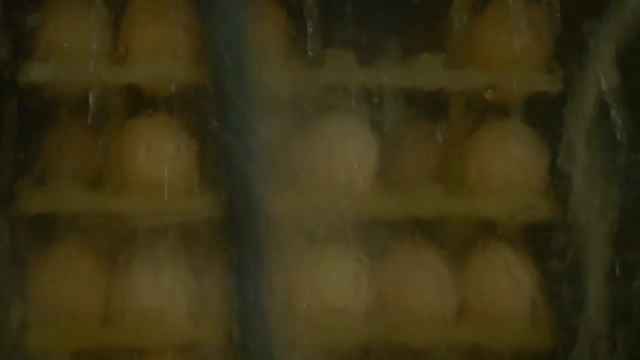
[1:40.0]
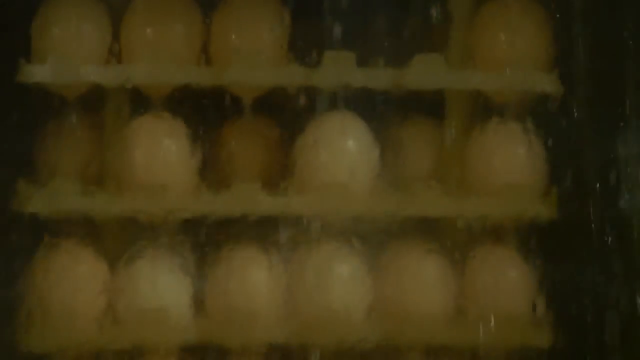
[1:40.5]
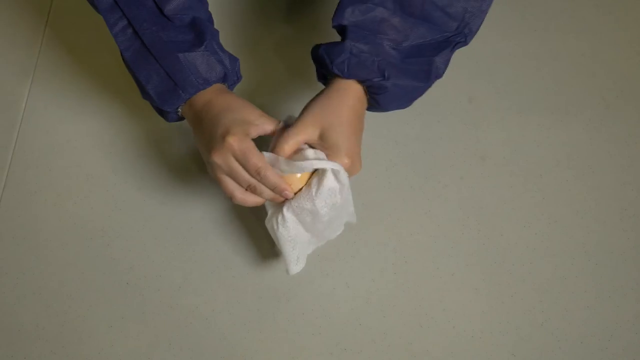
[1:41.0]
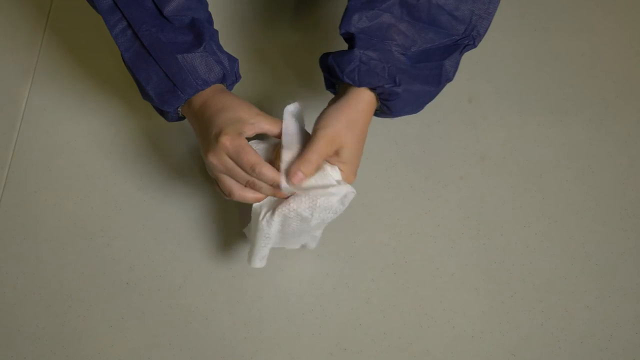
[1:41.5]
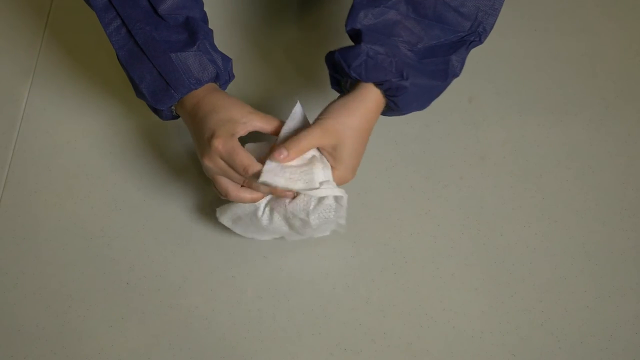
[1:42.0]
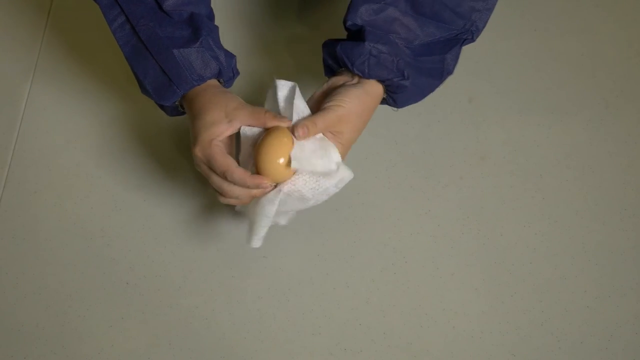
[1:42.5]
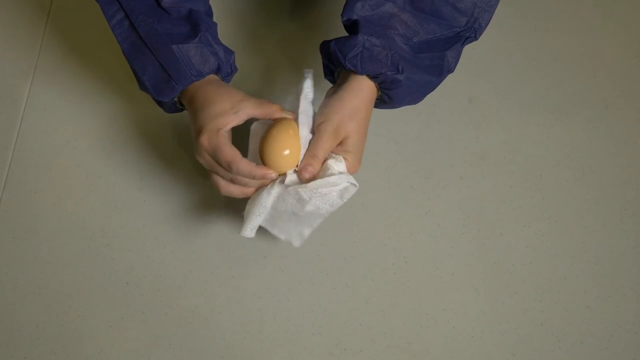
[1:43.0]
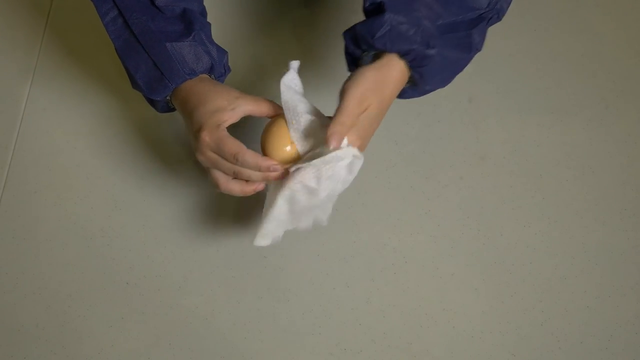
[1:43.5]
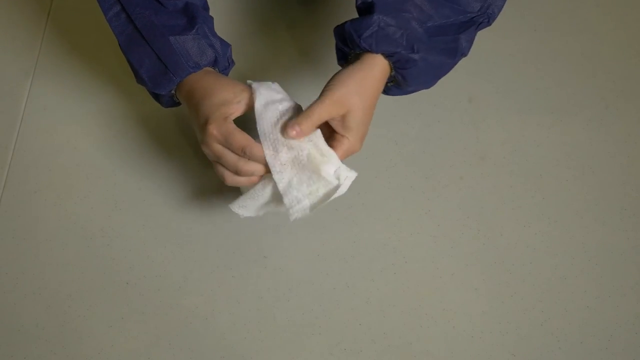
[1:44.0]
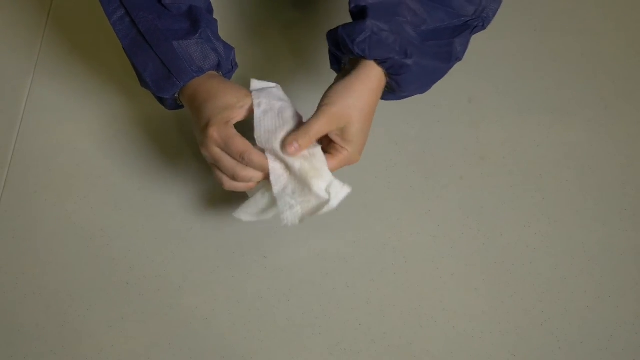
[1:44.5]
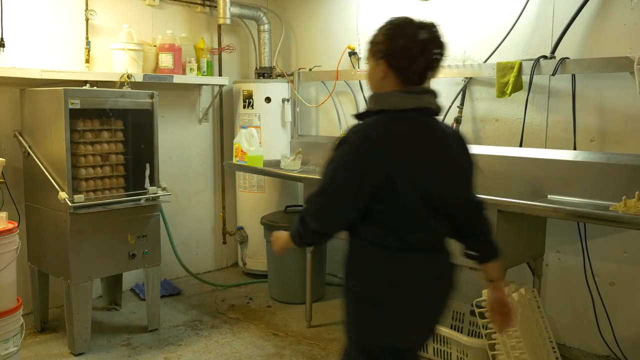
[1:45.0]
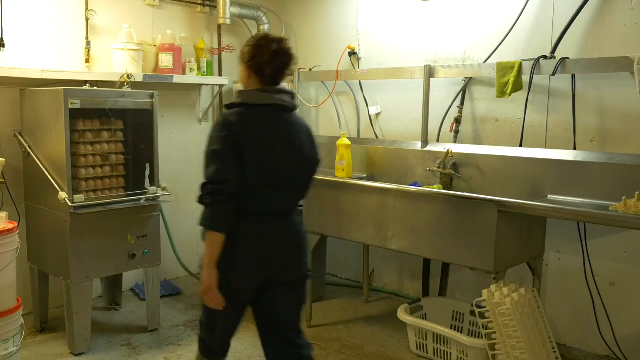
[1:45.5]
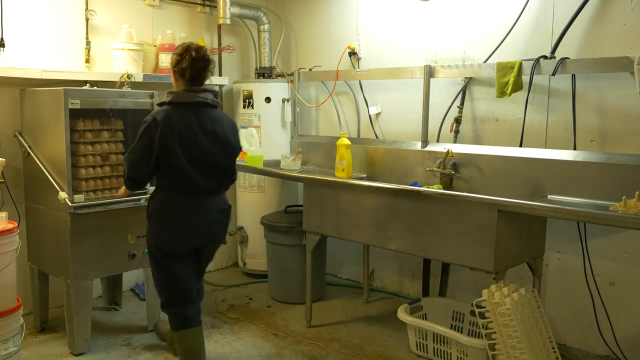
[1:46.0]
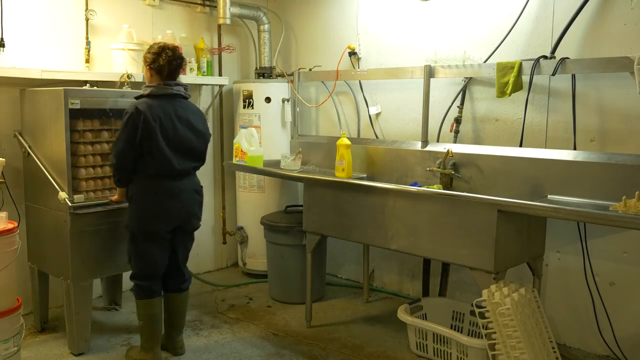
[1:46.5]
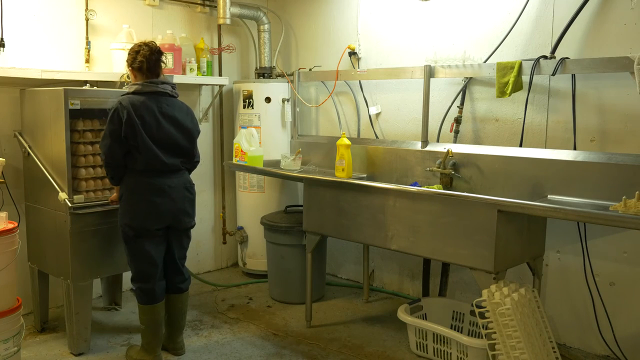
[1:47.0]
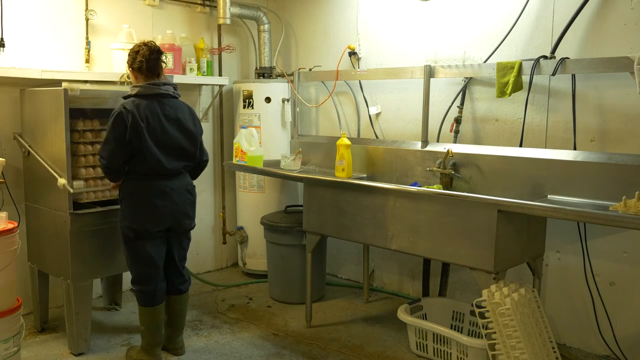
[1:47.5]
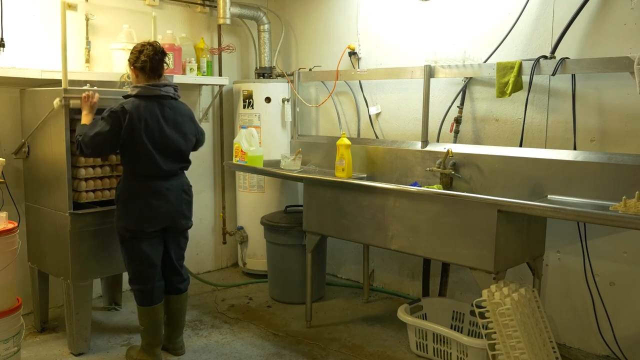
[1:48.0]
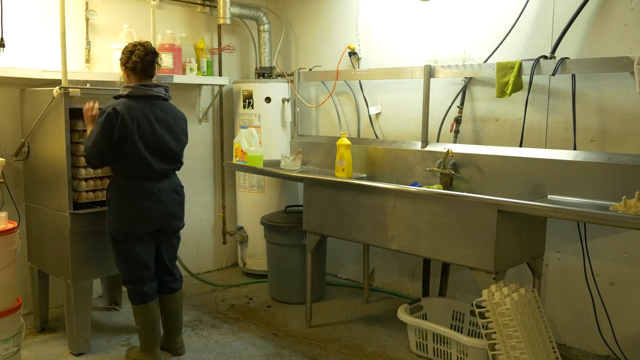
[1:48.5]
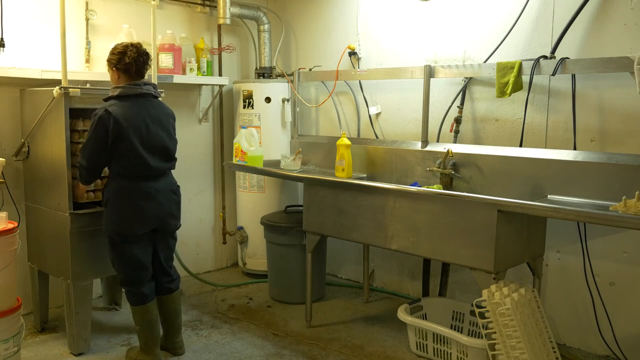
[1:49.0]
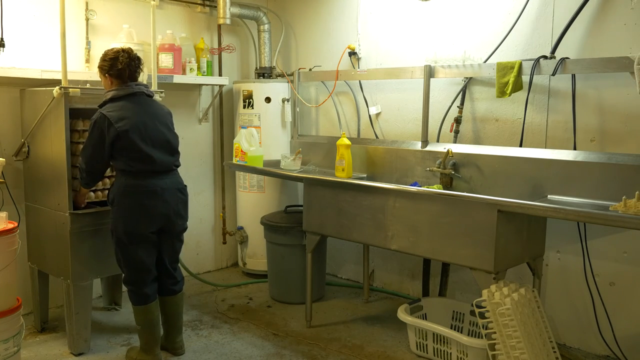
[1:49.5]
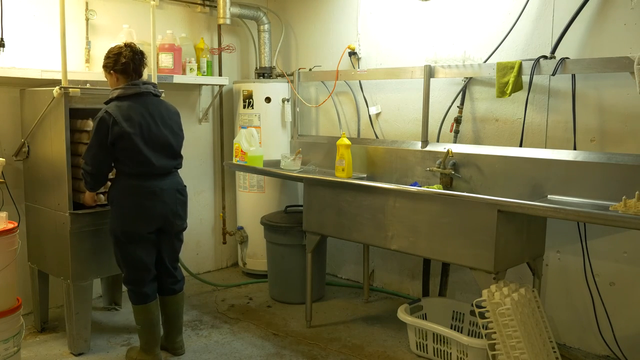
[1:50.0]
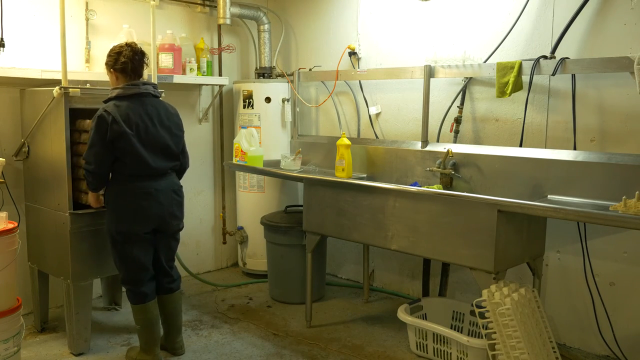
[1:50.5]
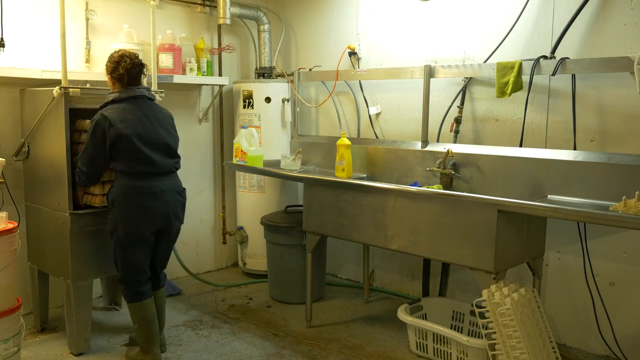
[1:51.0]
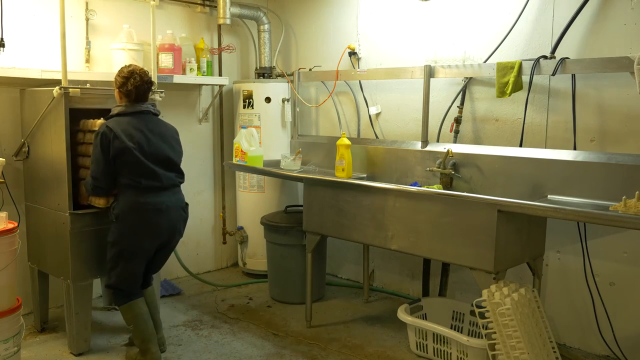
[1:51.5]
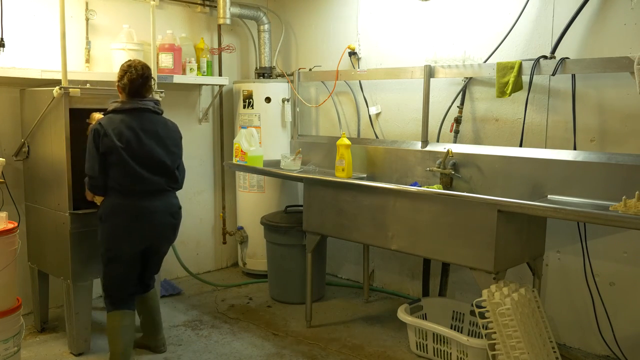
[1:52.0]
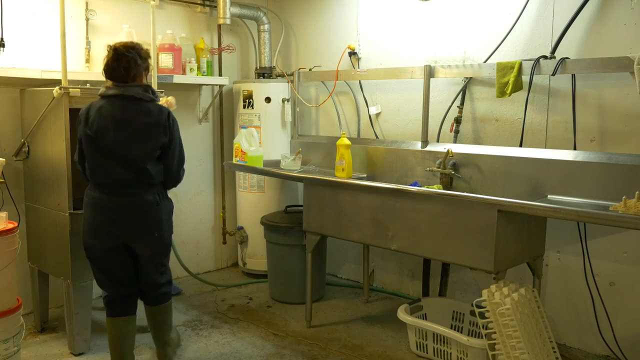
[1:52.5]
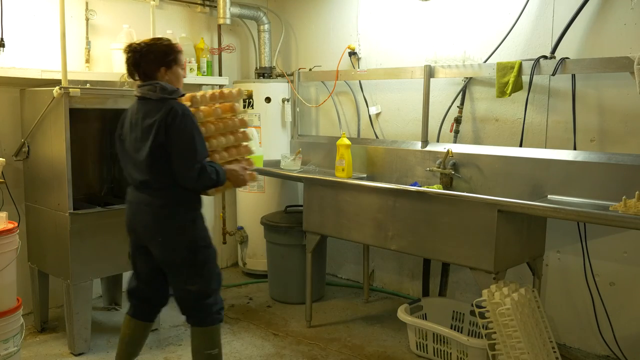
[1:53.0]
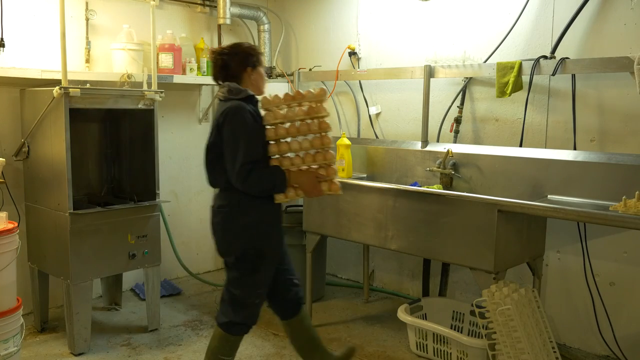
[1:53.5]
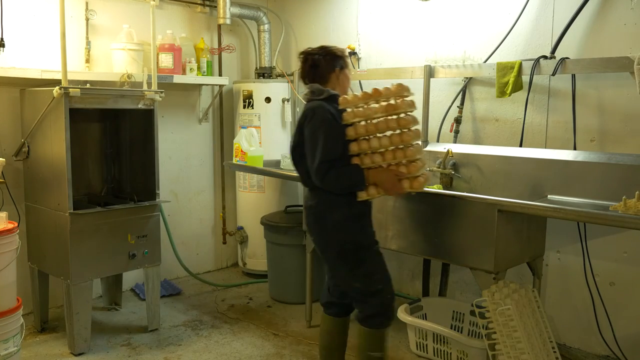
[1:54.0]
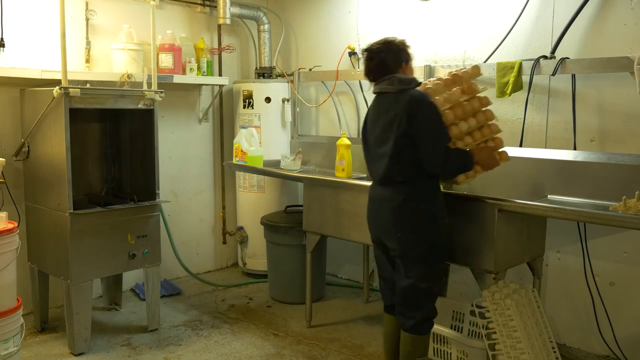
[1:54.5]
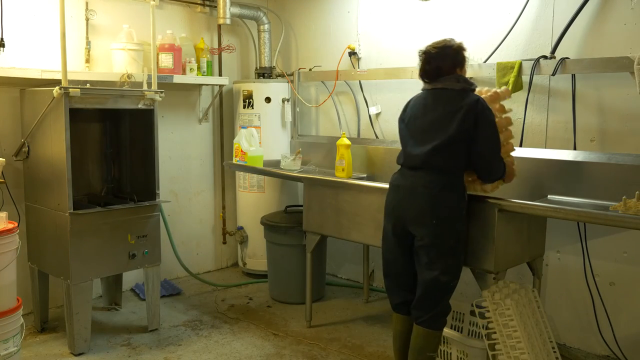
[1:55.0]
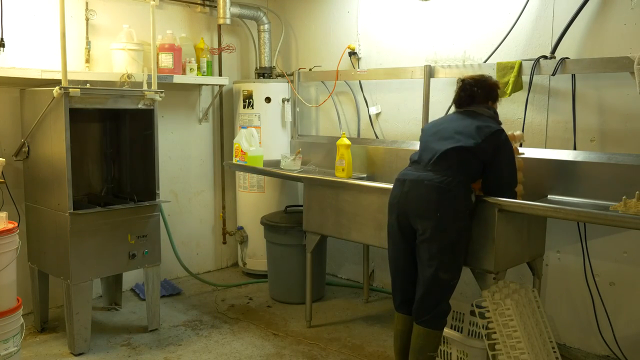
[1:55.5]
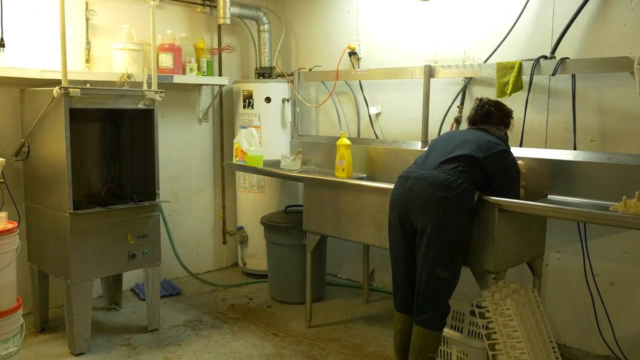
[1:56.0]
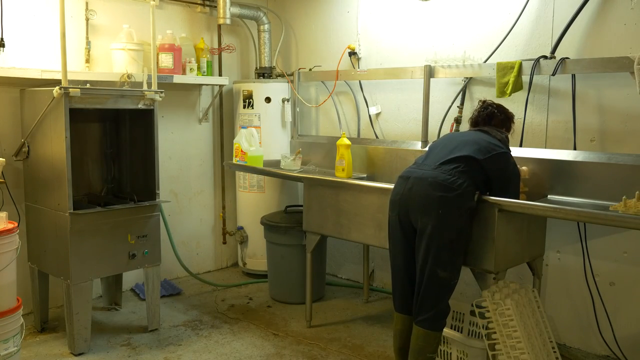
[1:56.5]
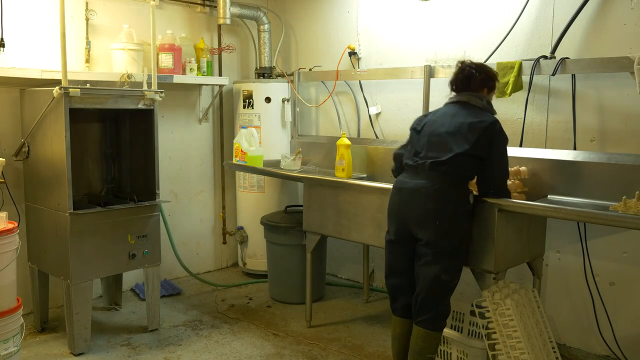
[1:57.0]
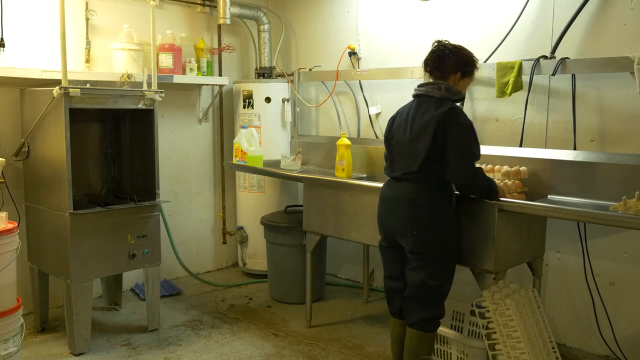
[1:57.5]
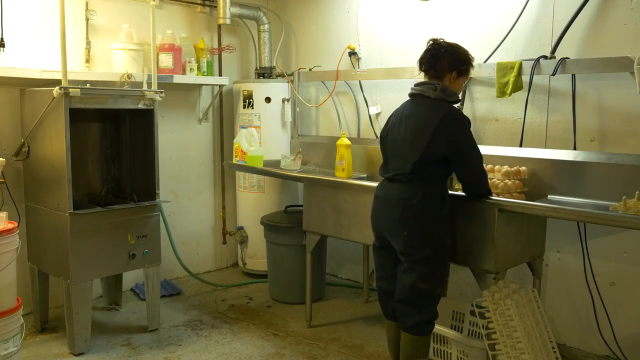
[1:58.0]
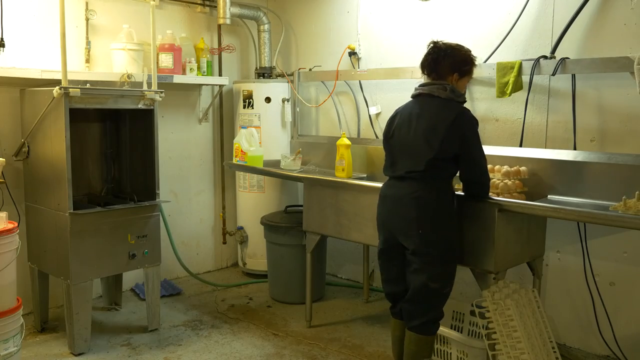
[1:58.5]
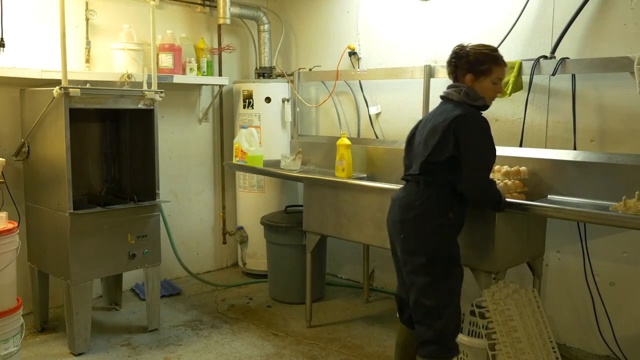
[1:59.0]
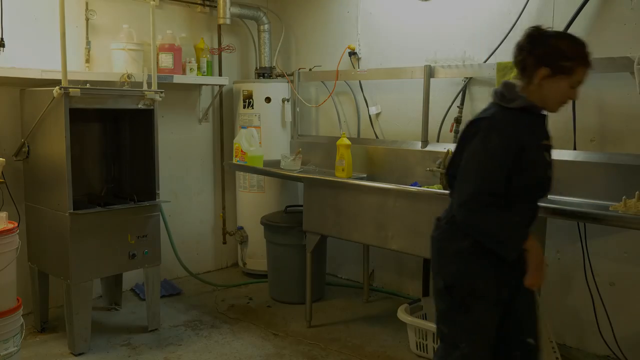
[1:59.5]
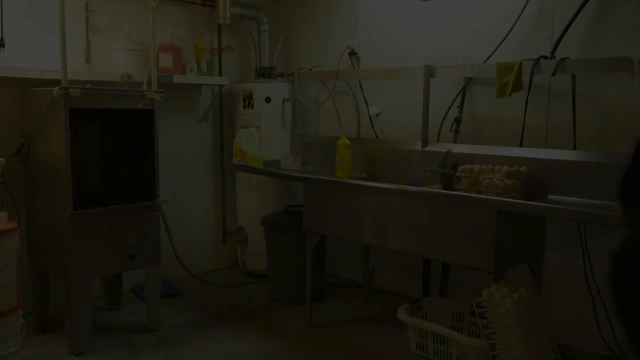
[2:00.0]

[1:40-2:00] Packs of light brown and whitish eggs rest on light gray racks, getting washed. Someone with blue coat sleeves and two white hands holds a light brown egg and a white piece of paper over a gray table, cleaning the egg. A person in a gray outfit, who looks like a white person with brown hair tied up, walks toward a gray machine with eggs inside on racks. In the background is off-white to gray shelving with containers of white and pink coloured liquids up top. A large gray industrial sink is on the right side with a white basket underneath. On the left is a gray-green lidded garbage can, and a white hot water tank is in the corner with gray tubing going into it from the top. The person, wearing boots, lifts up the glass lid, pulls out the rack of eggs and puts them in the steel sink.